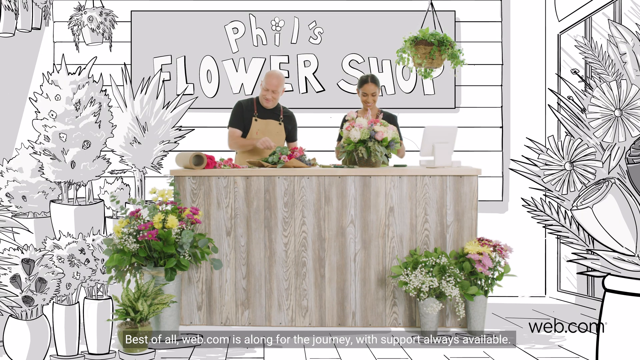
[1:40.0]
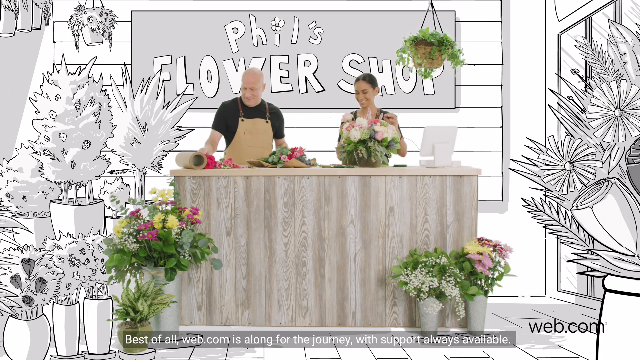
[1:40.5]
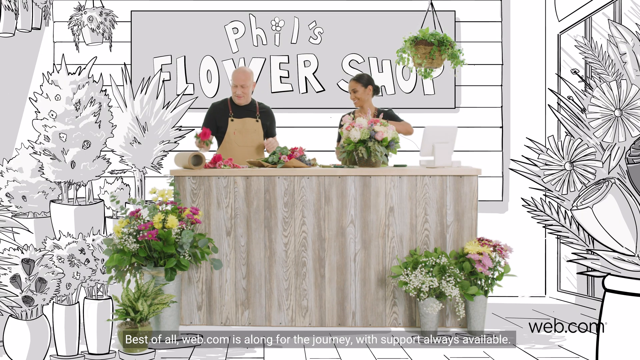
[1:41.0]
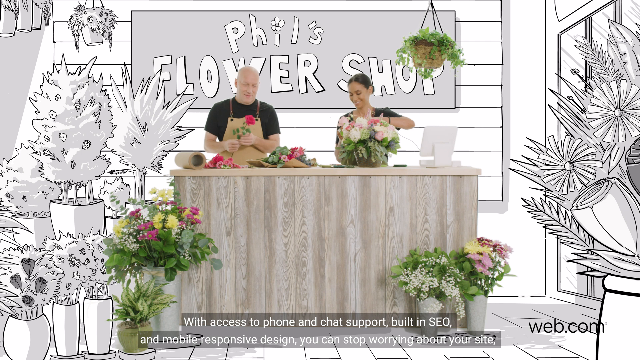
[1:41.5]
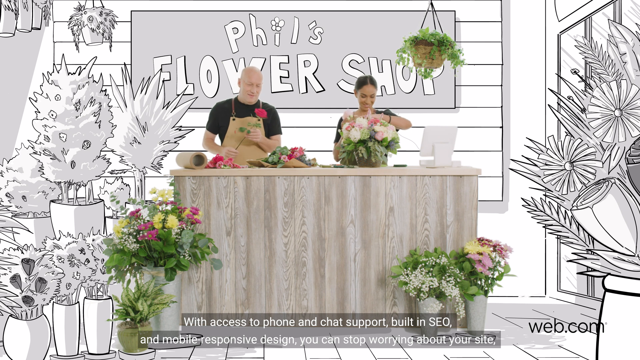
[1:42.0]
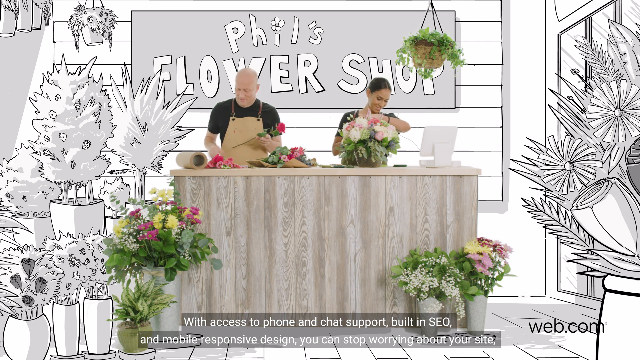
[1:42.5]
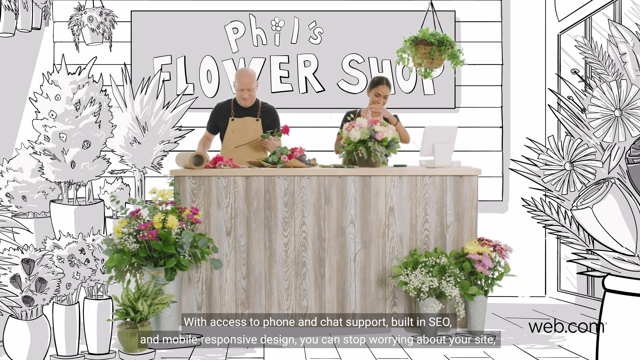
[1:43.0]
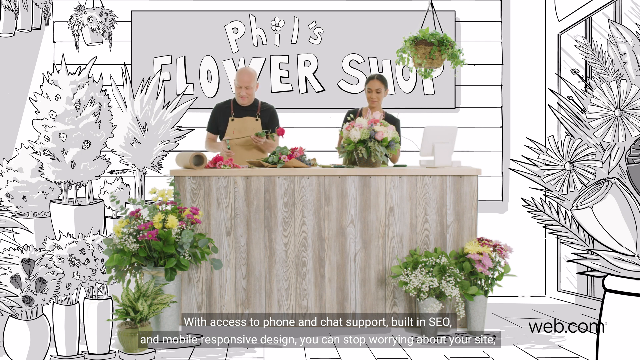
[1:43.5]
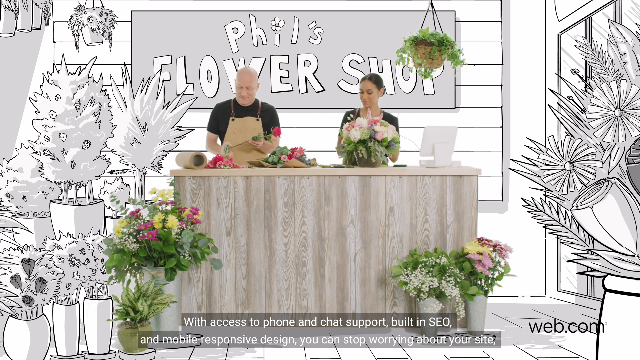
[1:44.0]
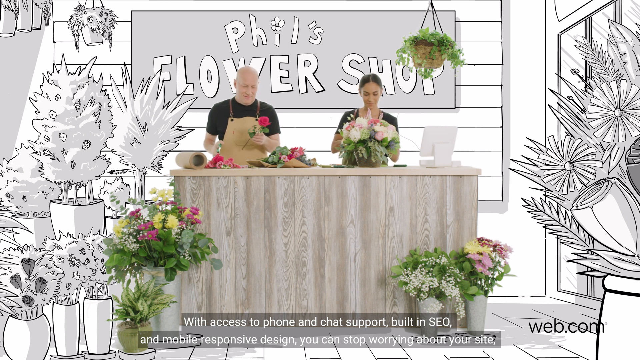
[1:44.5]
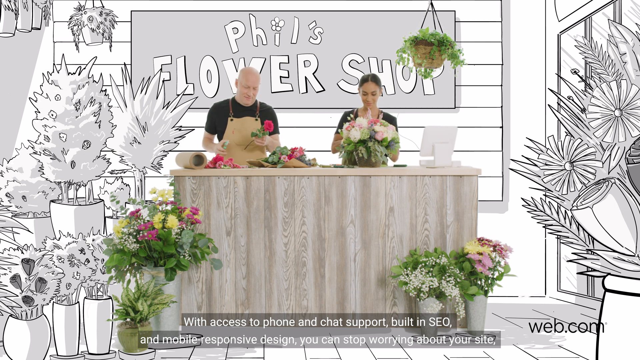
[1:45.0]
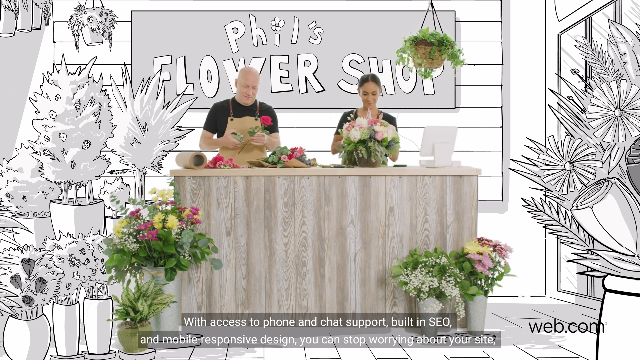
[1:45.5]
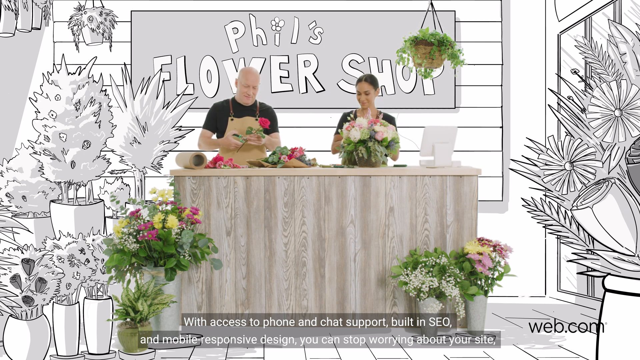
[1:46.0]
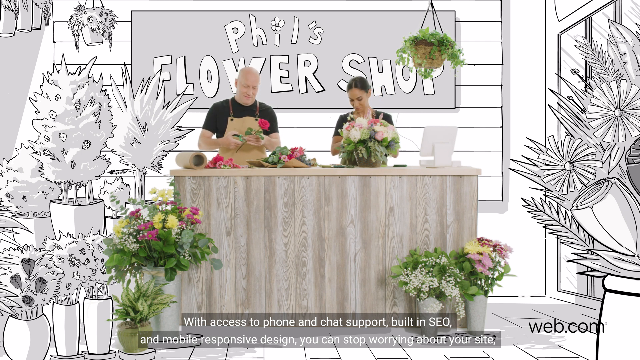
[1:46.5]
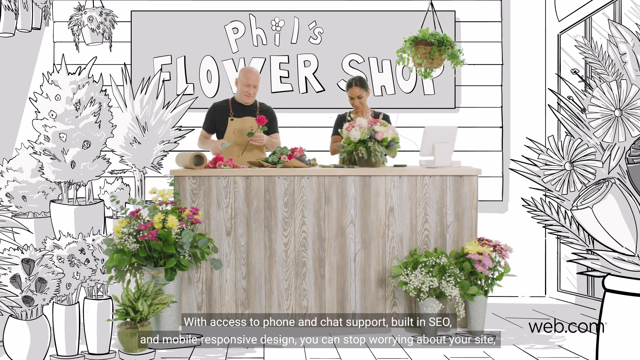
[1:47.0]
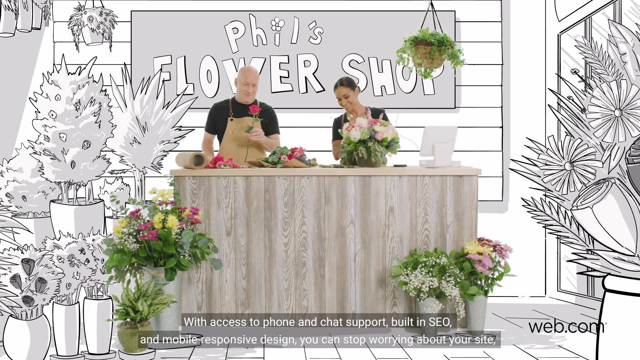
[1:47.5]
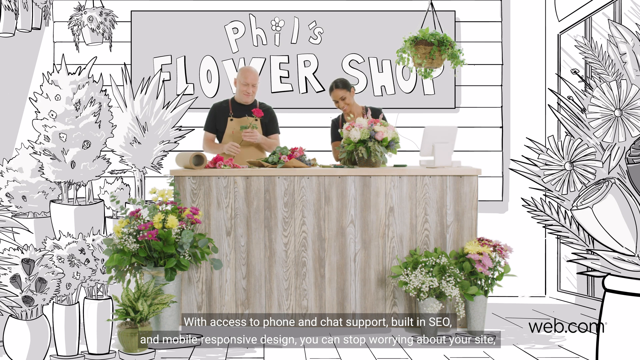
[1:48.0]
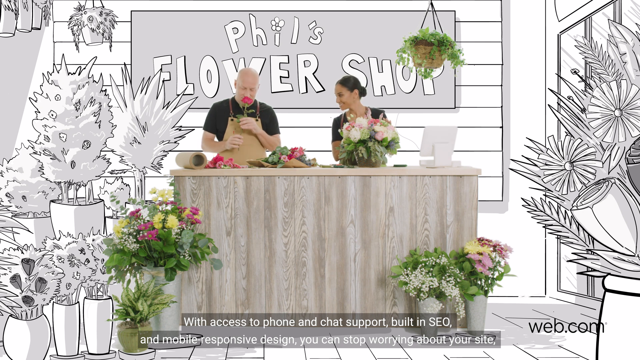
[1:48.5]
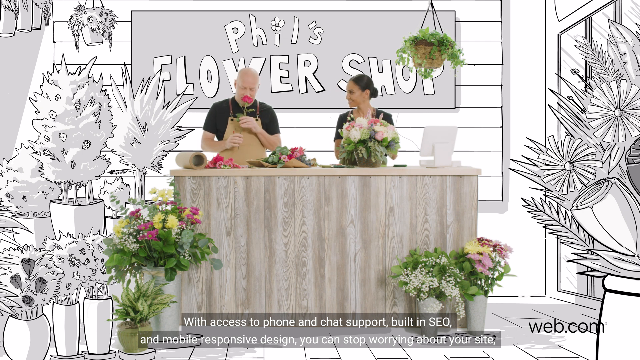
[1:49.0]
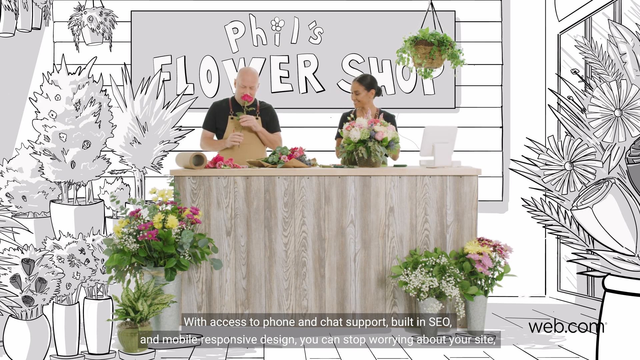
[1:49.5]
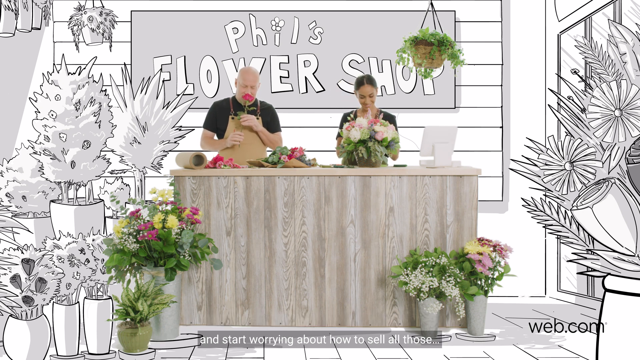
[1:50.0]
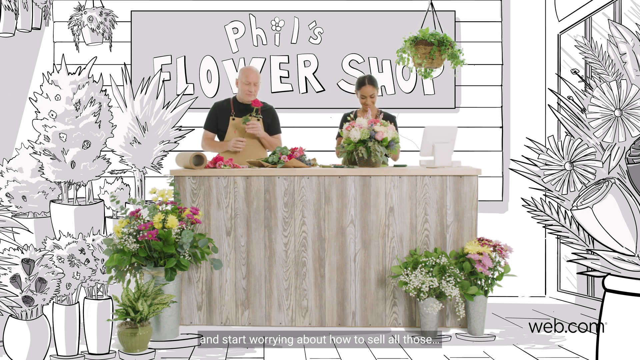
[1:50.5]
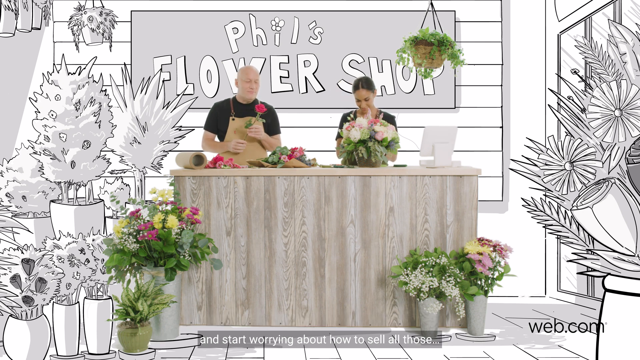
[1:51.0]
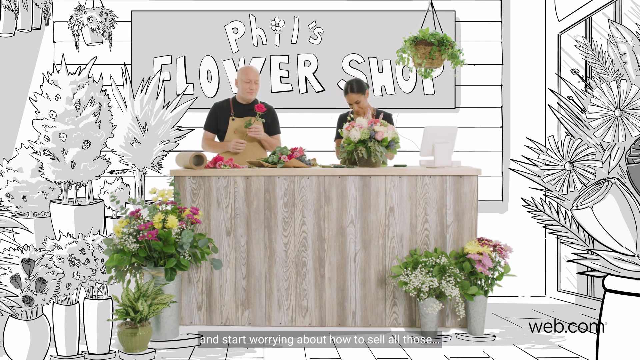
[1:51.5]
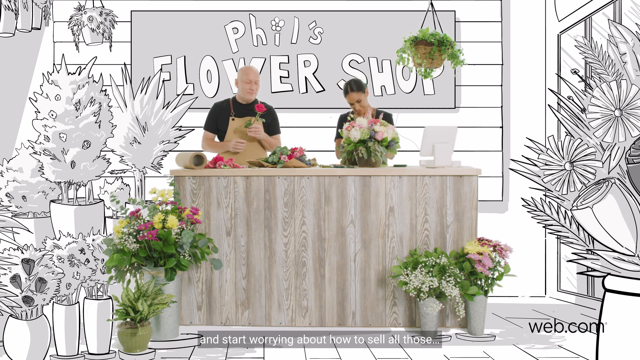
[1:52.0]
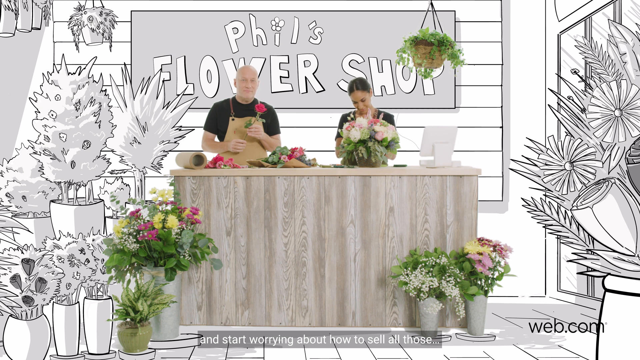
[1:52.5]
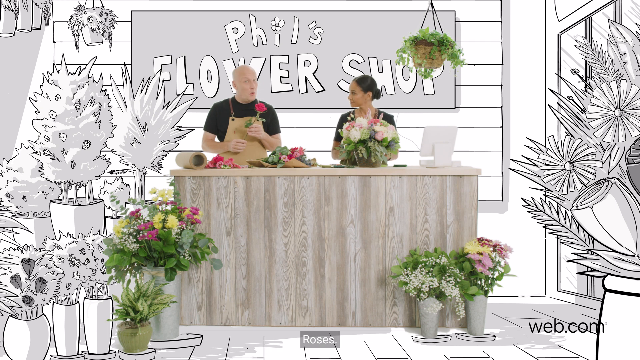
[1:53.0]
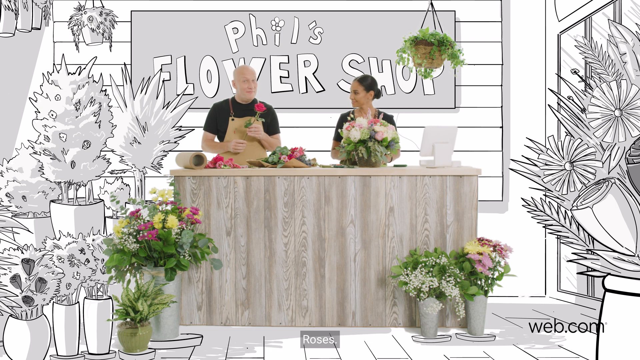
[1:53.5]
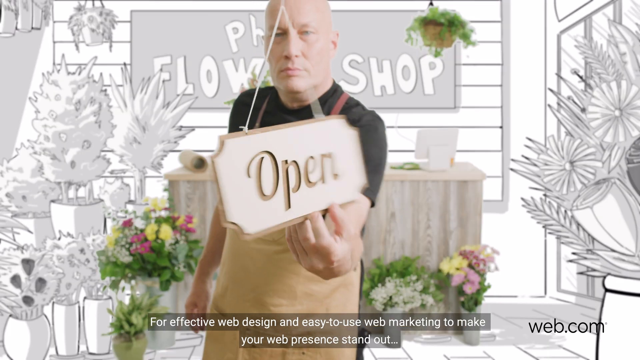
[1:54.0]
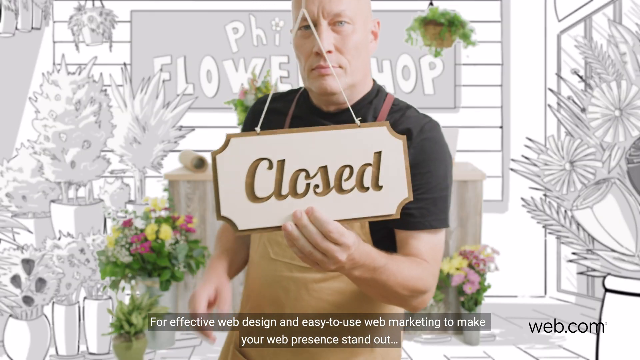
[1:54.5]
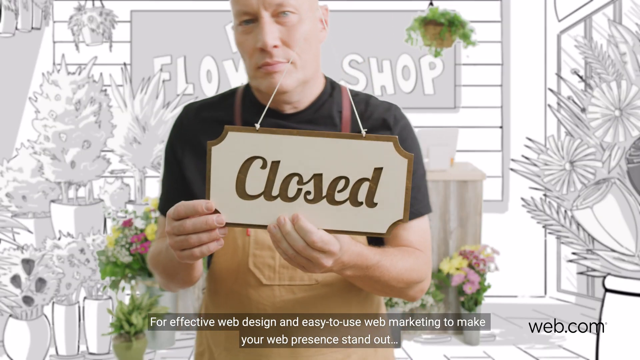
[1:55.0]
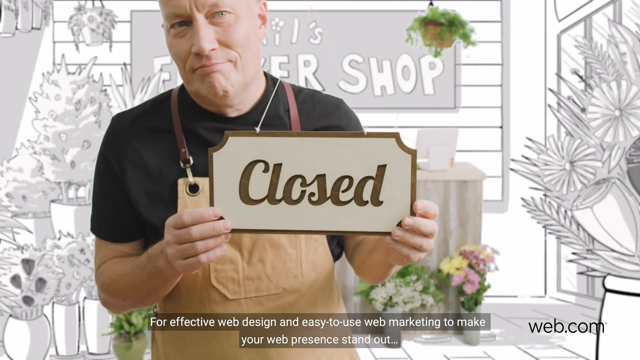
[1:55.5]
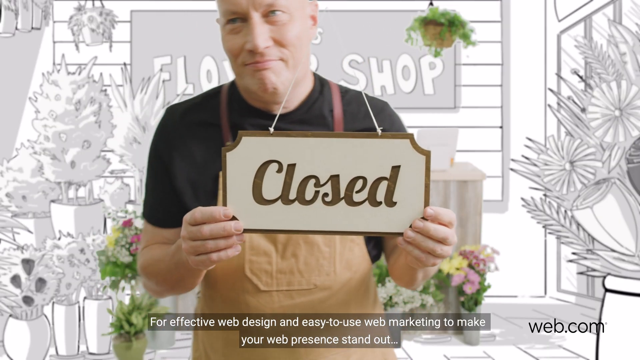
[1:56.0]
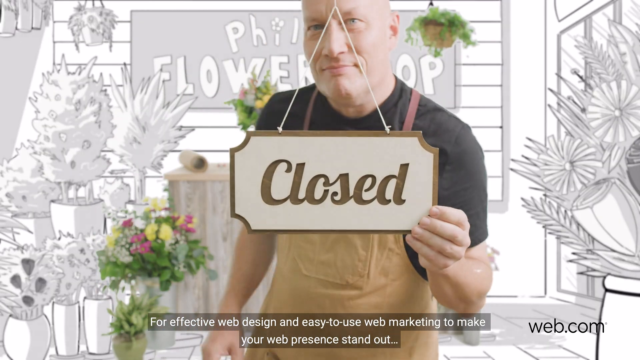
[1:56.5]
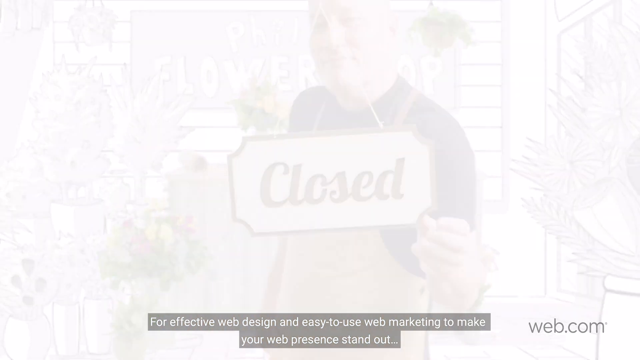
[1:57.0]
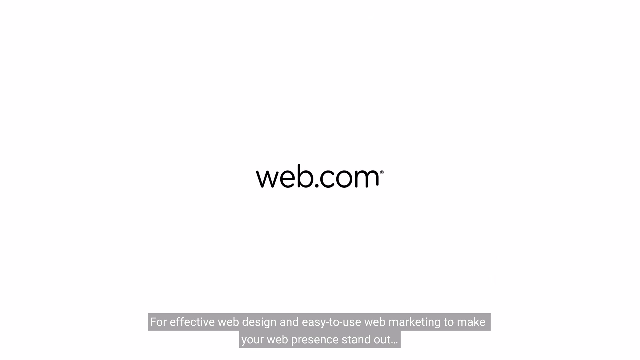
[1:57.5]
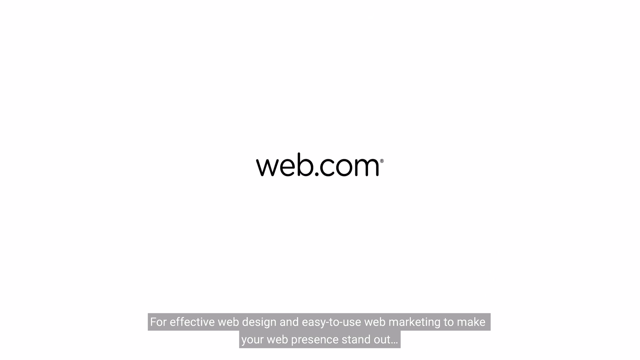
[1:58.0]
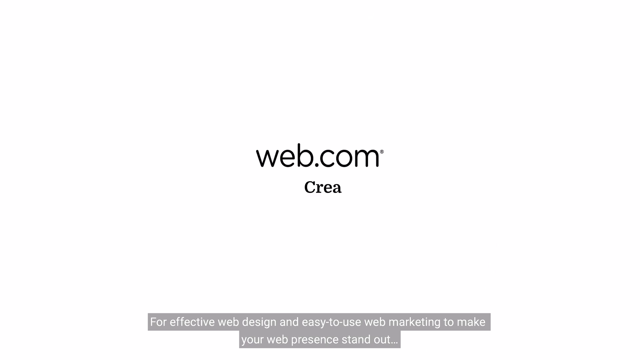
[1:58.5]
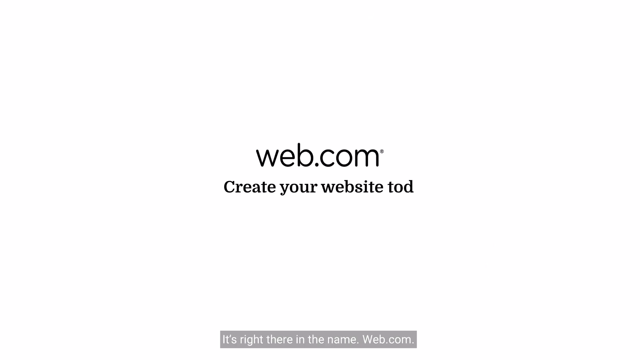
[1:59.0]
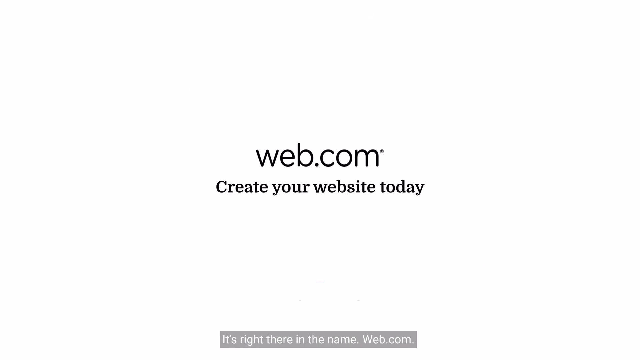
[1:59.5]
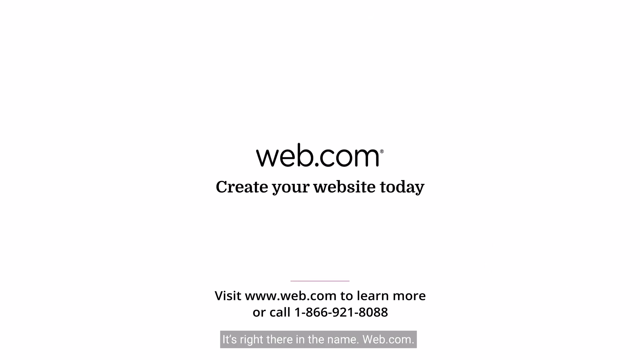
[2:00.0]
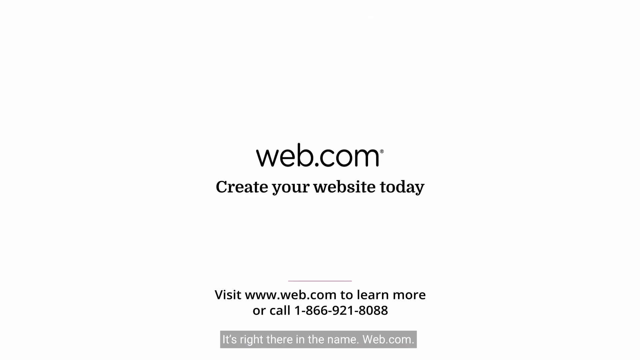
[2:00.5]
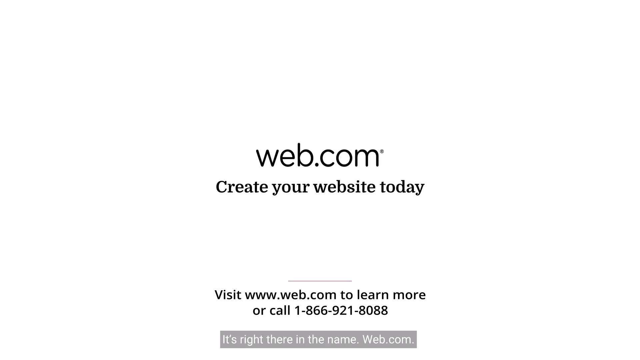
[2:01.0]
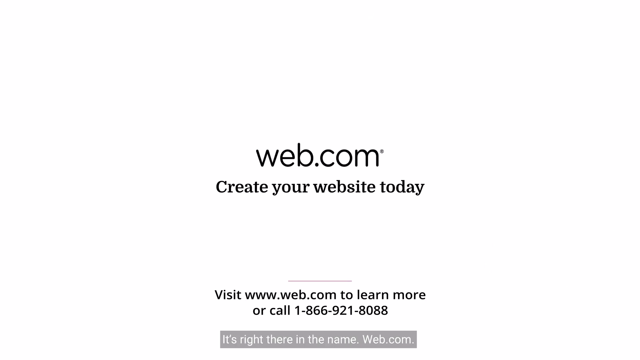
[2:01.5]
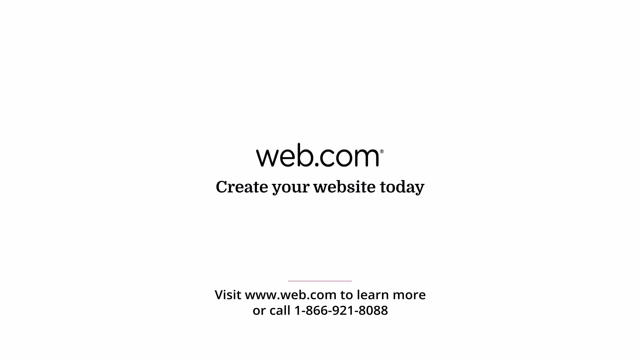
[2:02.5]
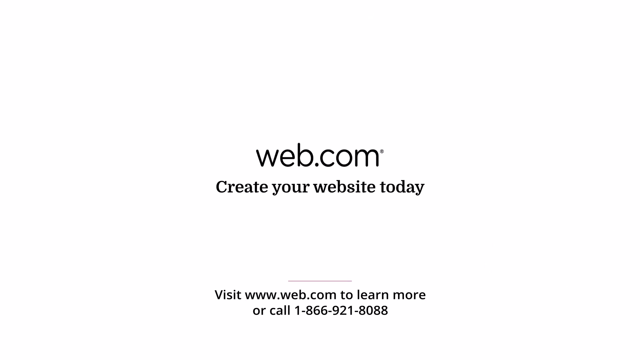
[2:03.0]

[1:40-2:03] The man and the woman stand behind the counter arranging flowers. The lady has what looks like an almost finished arrangement in front of her, while the man is still midway through an arrangement lying flat on the countertop. He cuts leaves off what looks like a rose and smells it. The lady looks at him and smiles. The man is saying something, and the subtitle says "for effective web design and easy to use web marketing to make your website presence stand out". A close-up then shows the man in the black t-shirt and tan apron looking serious, with the cartoon-style background of the Phil flower shop logo and flowers on the sides behind him, and the photo-style counter with a laptop and the flower arrangements on it. He turns a sign, which appears to be hanging on a glass door facing the camera, to closed, and then has a faint smile on his face. The video moves to a white background with only the web.com logo, with "create your website today" underneath and, at the bottom, "visit www.web.com to learn more or call 1-866-921-8088". The subtitle says "it's right there in the name web.com".